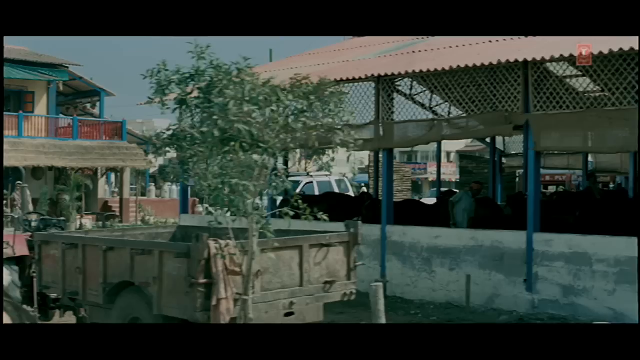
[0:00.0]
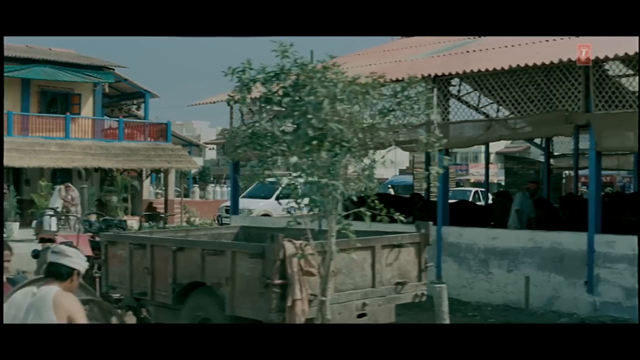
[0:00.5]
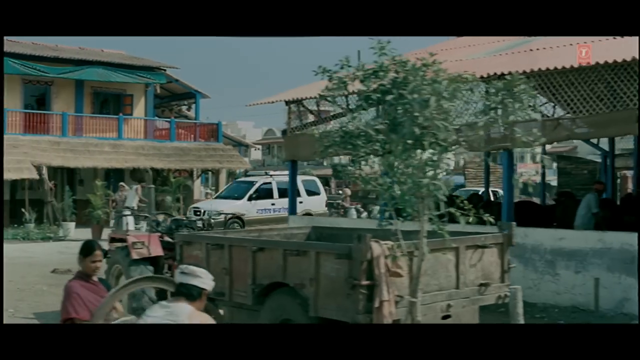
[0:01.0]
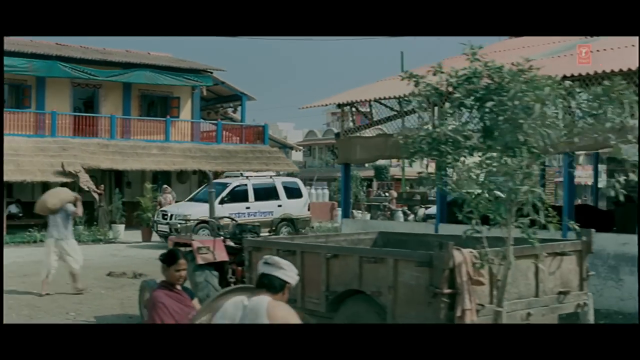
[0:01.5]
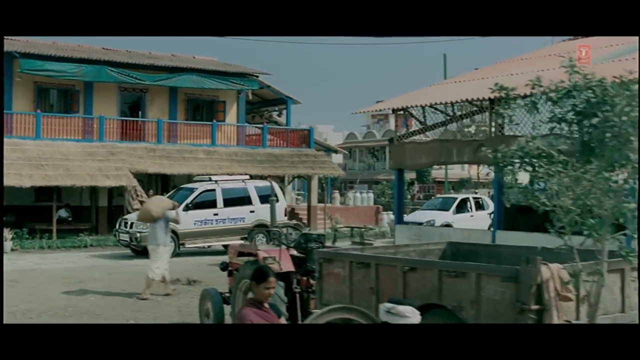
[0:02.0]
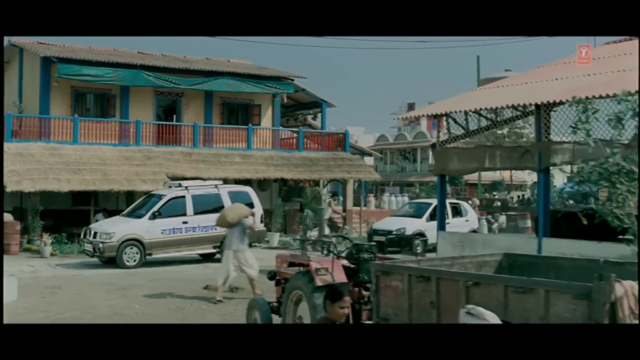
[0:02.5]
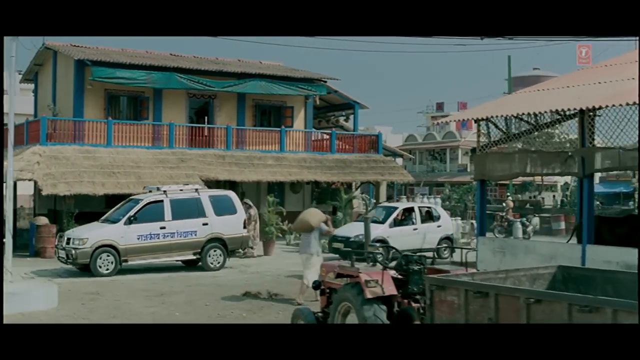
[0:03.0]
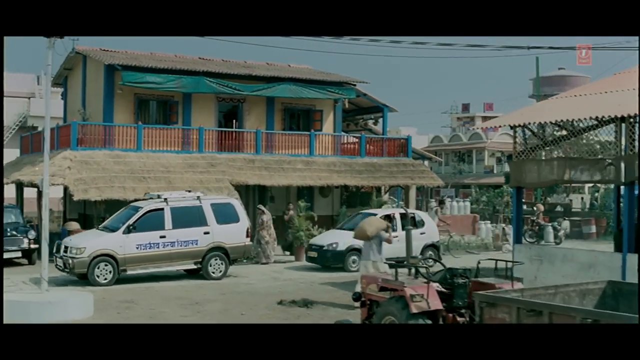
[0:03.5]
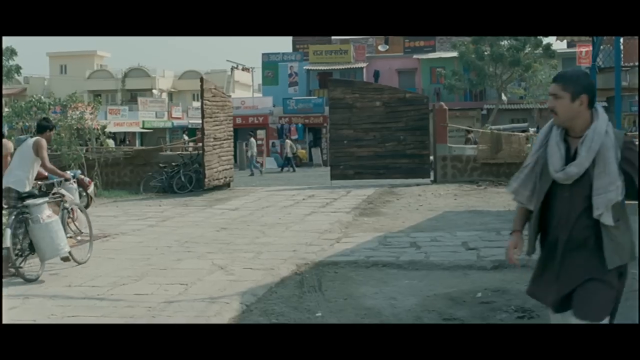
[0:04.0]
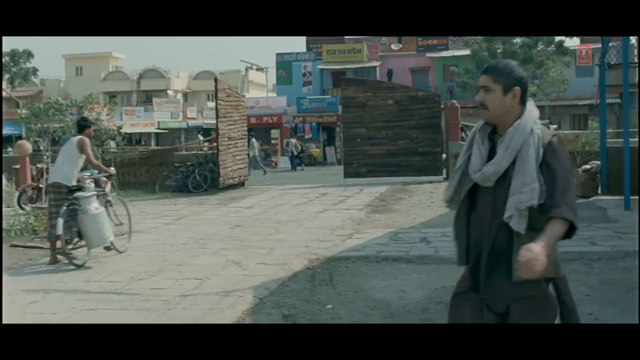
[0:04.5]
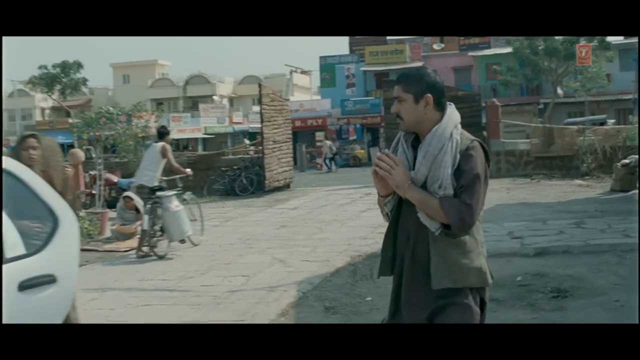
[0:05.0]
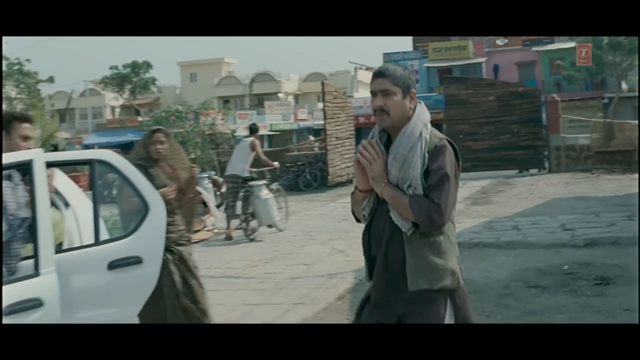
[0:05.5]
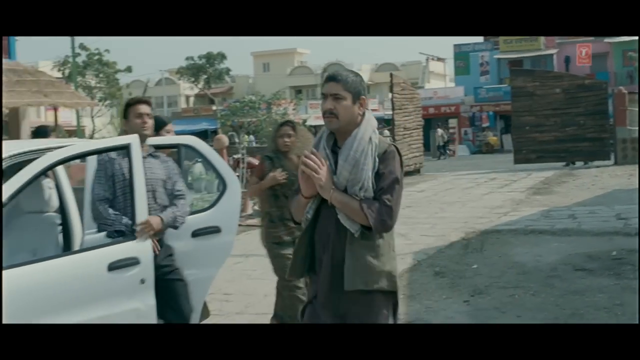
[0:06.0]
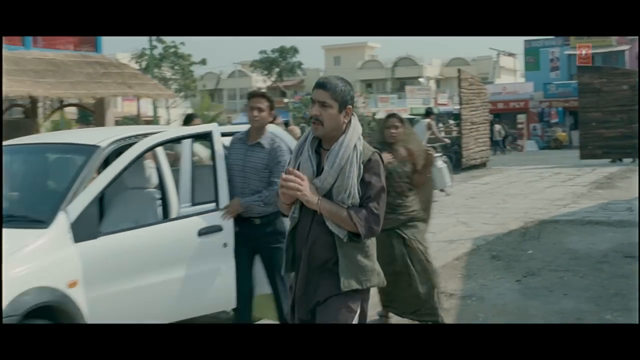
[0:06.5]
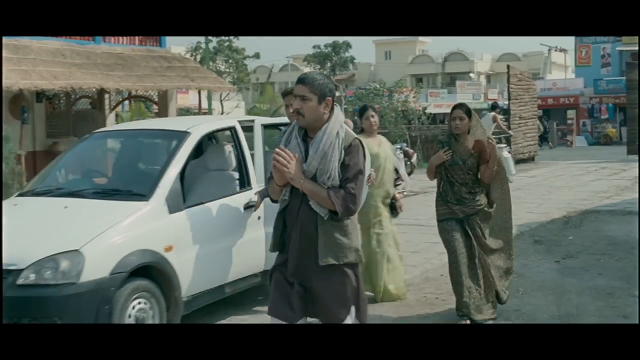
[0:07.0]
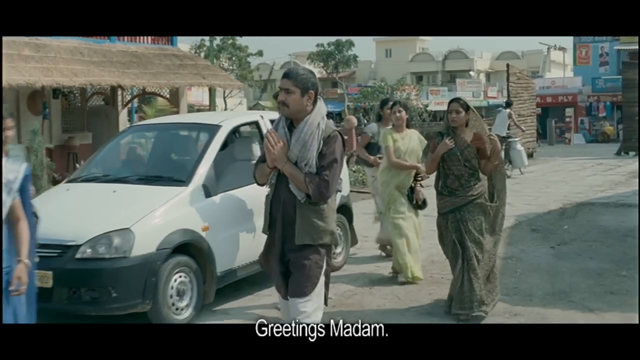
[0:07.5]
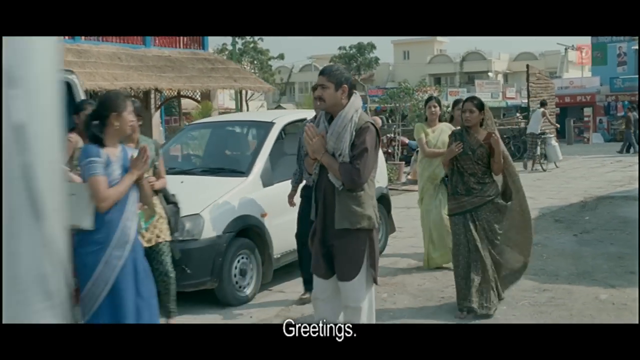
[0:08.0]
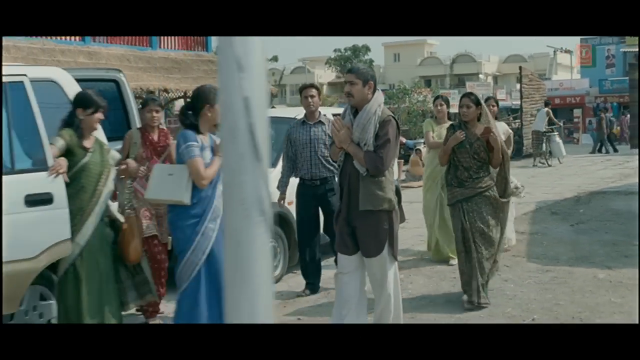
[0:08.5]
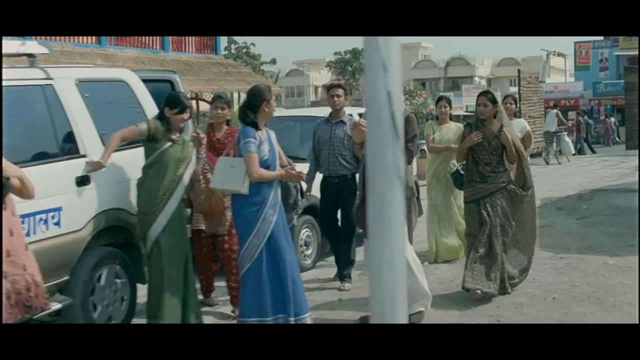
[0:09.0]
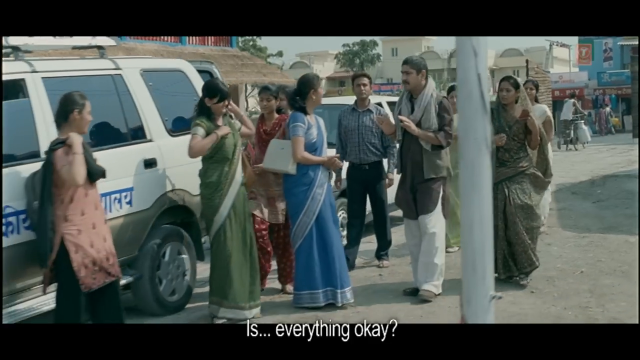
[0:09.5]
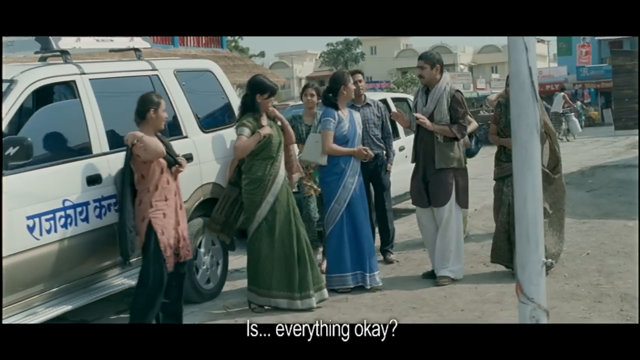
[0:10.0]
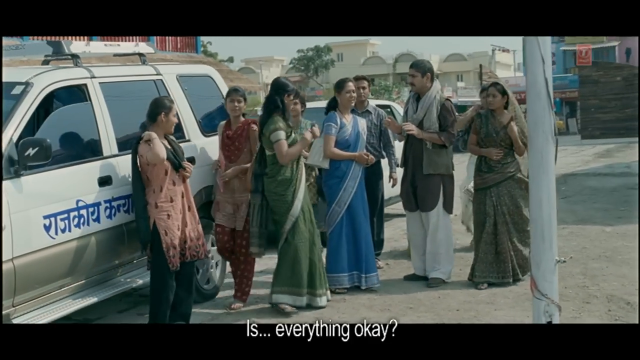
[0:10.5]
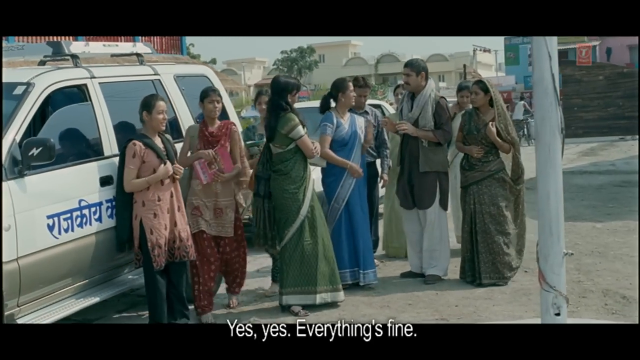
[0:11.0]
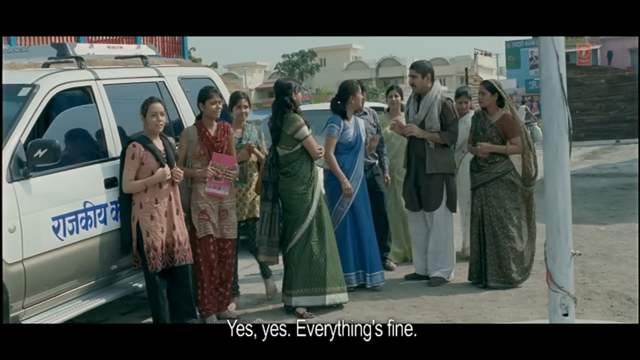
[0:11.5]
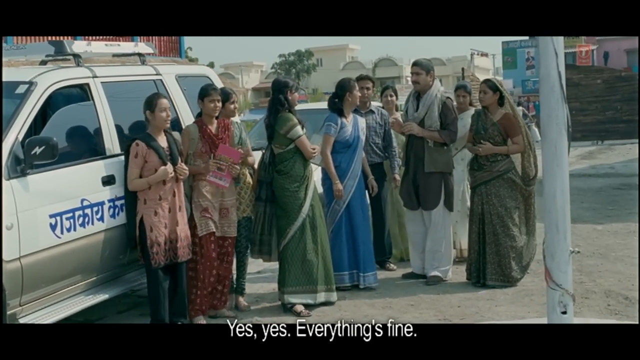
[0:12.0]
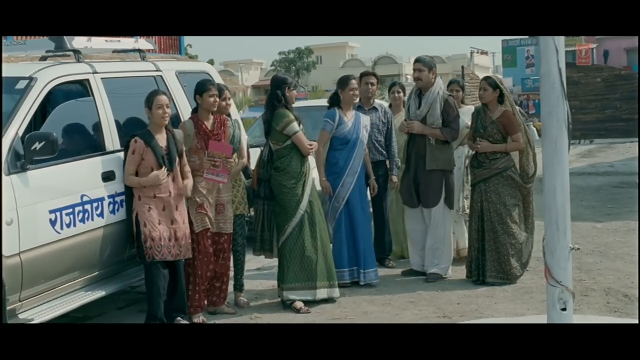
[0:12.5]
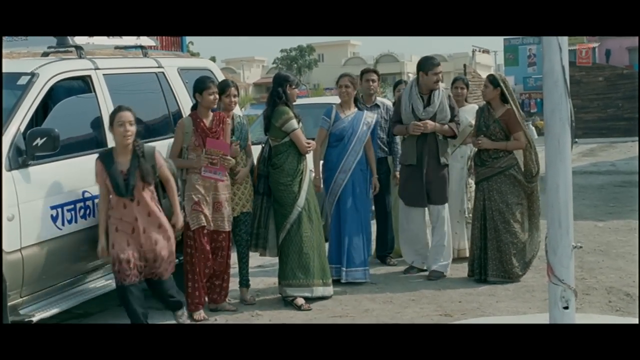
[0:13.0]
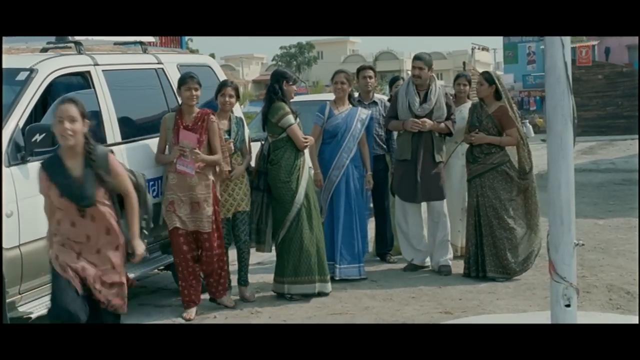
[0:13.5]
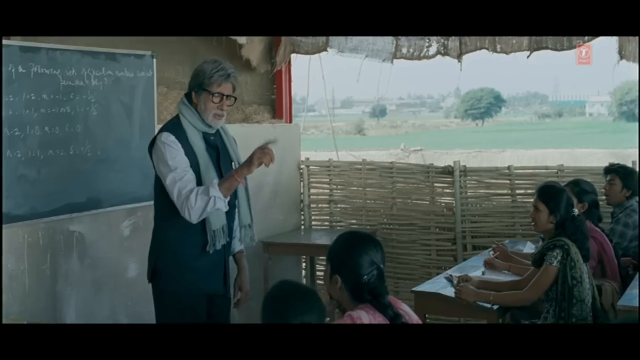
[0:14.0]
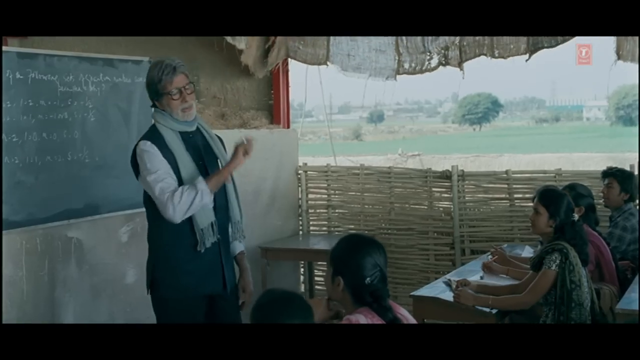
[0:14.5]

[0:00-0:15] A vehicle drives through the streets of a place that is maybe India or somewhere similar. A man who seems to be the focal point comes running up to a group of people with his hands kind of clasped in prayer hands. Two different groups of people, women and men, get out of two vehicles. The women wear head coverings over their heads and sari-style clothing. There is writing on the vehicles in a language that is unclear, possibly Arabic or something else. At the end, the scene cuts to a professor-like man teaching what seems to be a class full of students in an outdoor classroom.